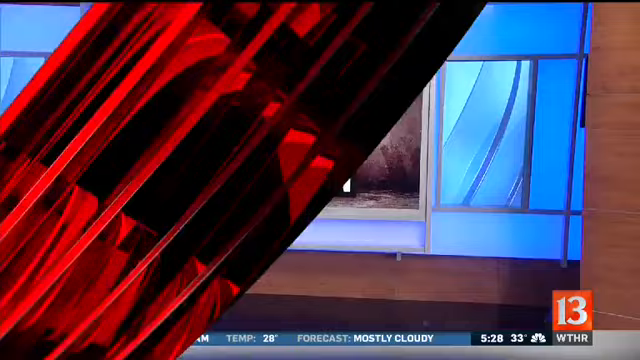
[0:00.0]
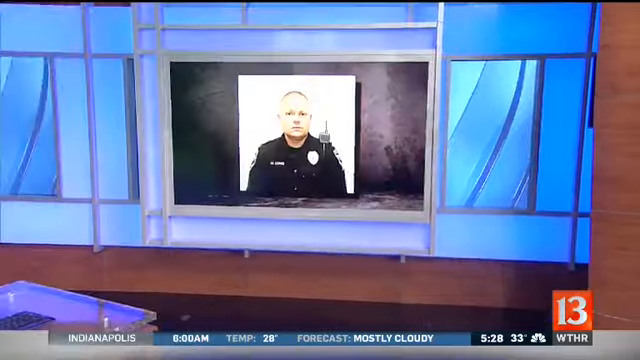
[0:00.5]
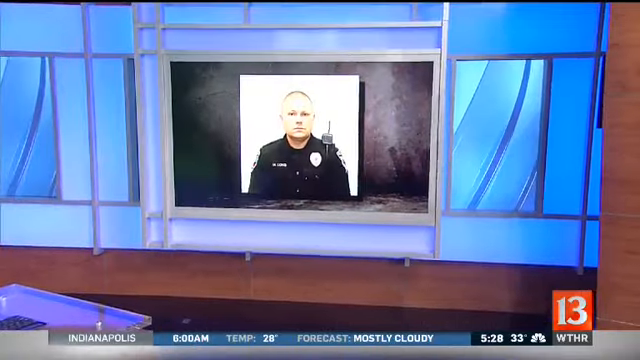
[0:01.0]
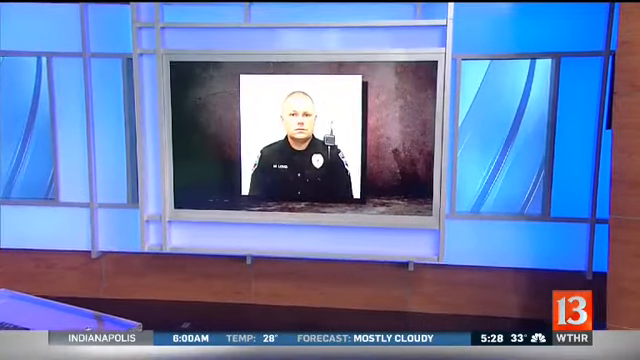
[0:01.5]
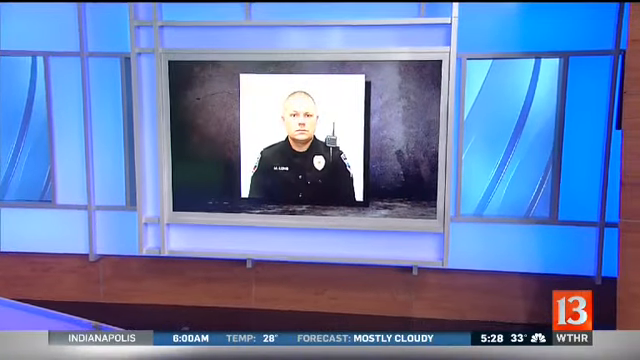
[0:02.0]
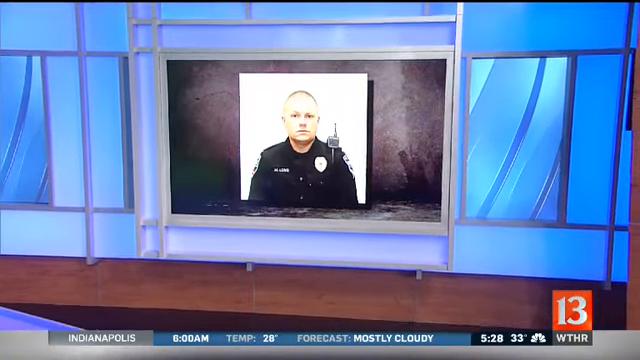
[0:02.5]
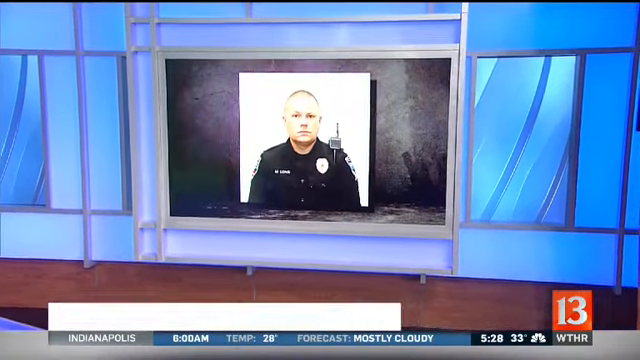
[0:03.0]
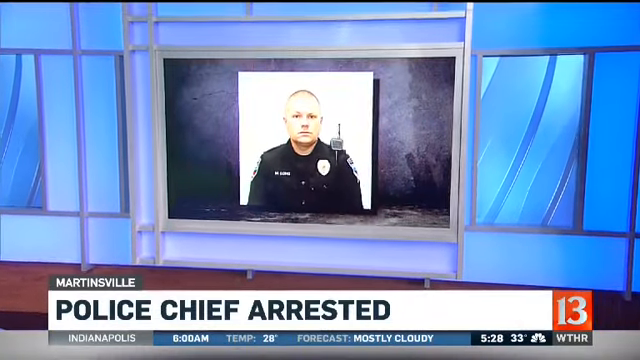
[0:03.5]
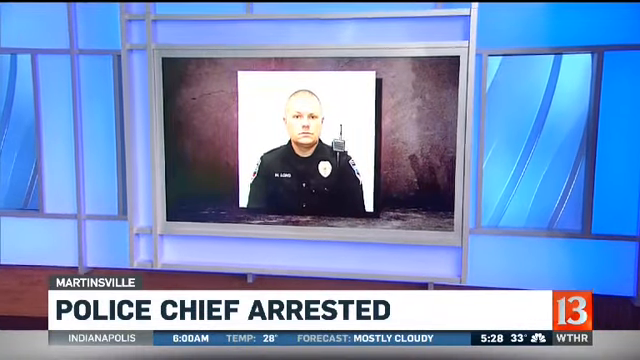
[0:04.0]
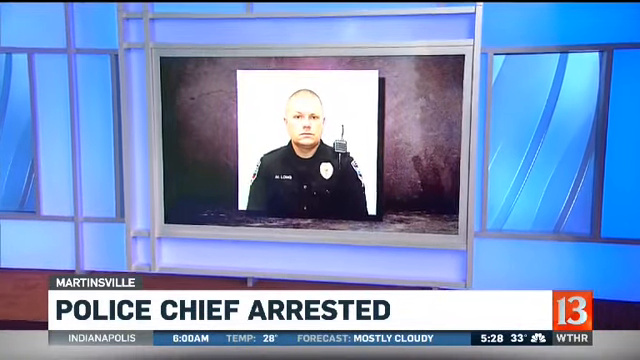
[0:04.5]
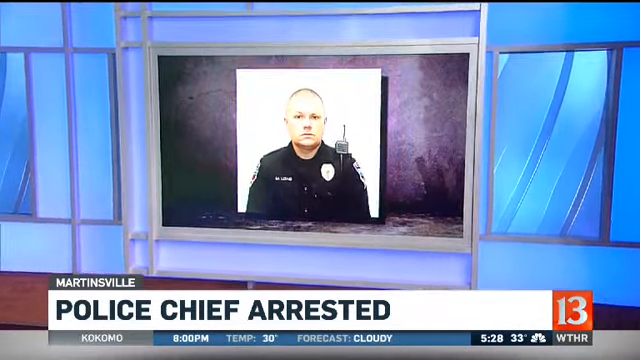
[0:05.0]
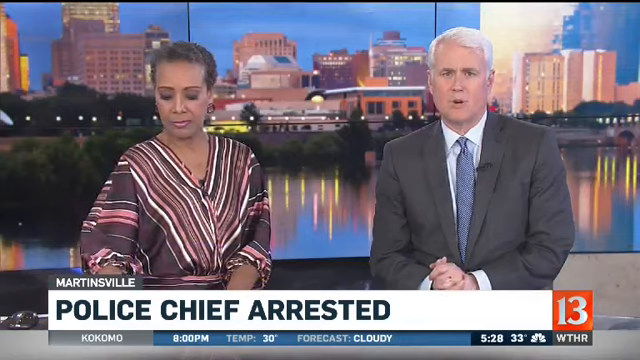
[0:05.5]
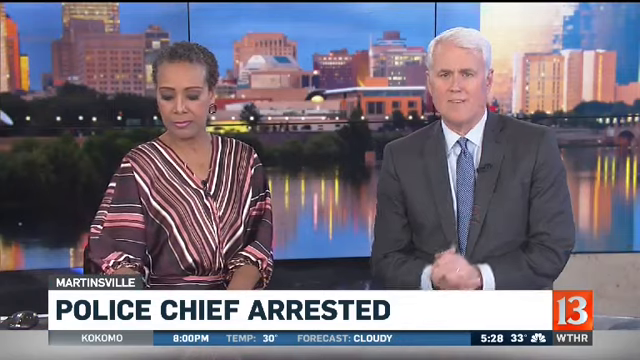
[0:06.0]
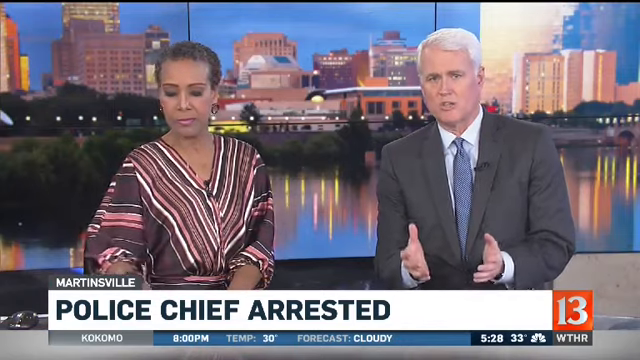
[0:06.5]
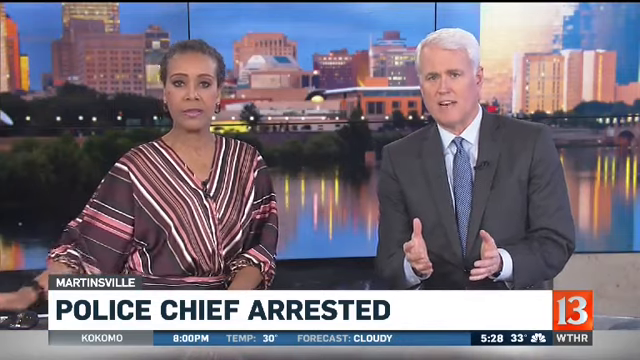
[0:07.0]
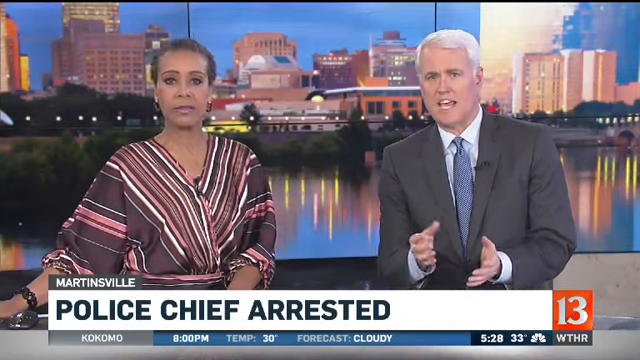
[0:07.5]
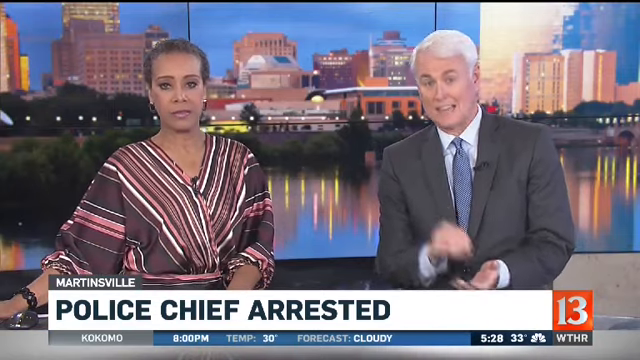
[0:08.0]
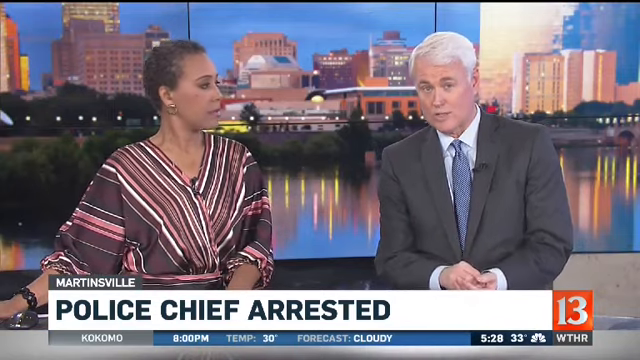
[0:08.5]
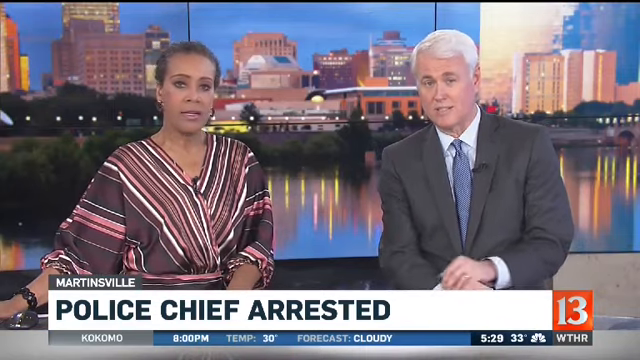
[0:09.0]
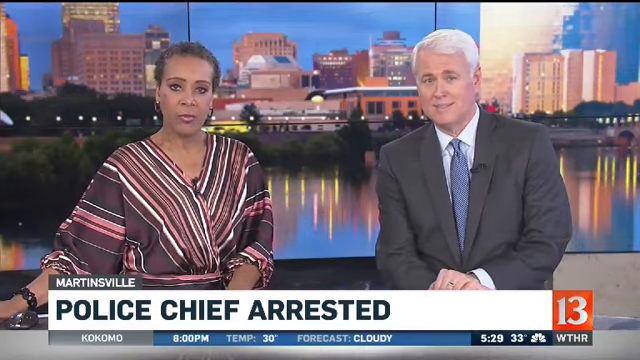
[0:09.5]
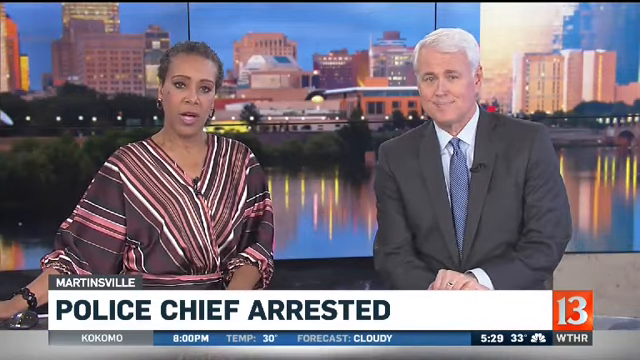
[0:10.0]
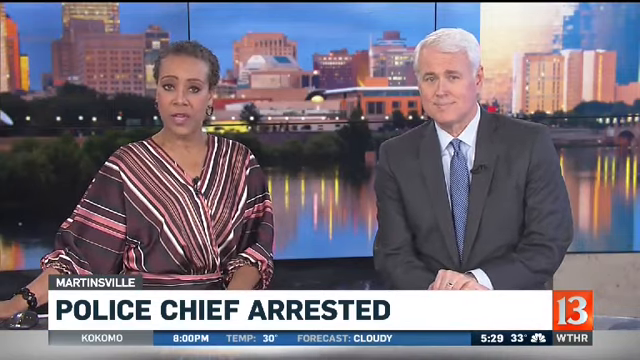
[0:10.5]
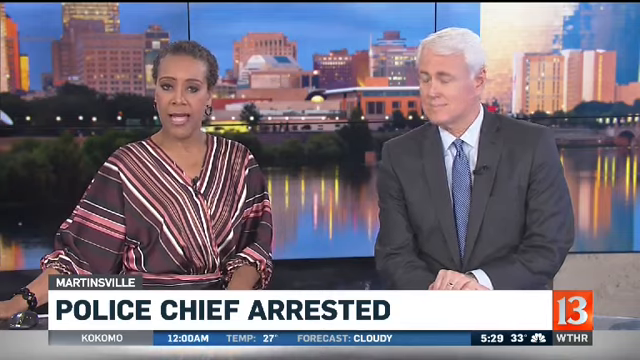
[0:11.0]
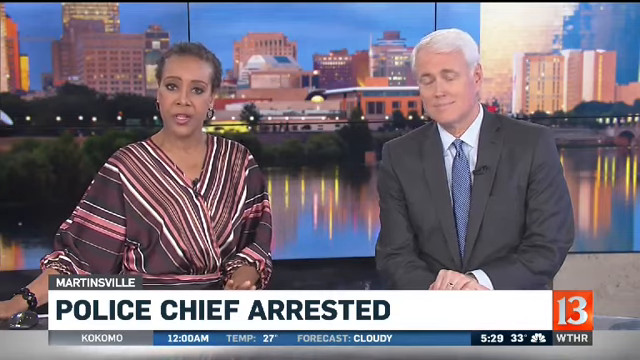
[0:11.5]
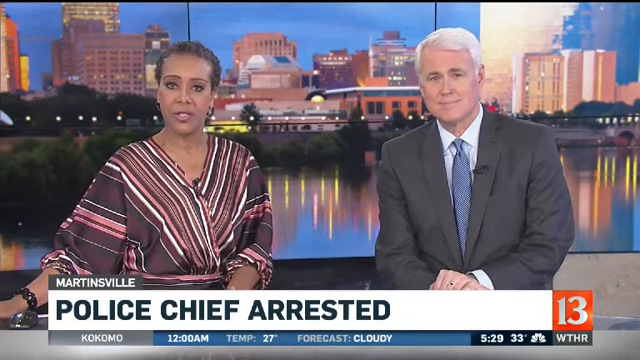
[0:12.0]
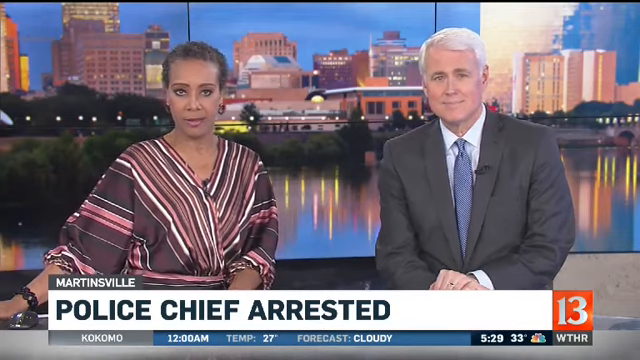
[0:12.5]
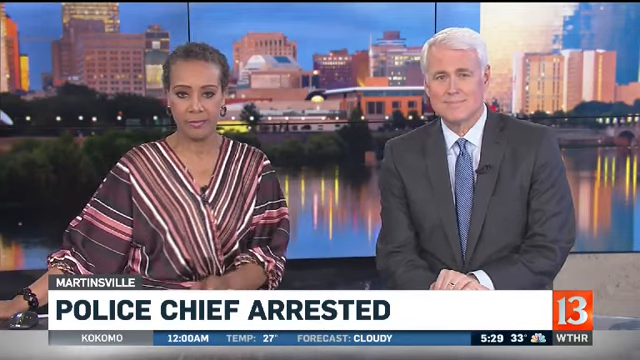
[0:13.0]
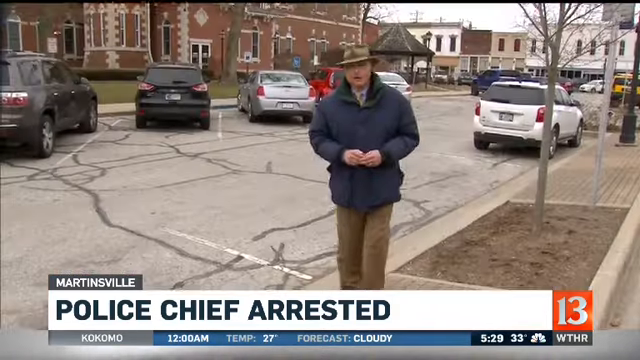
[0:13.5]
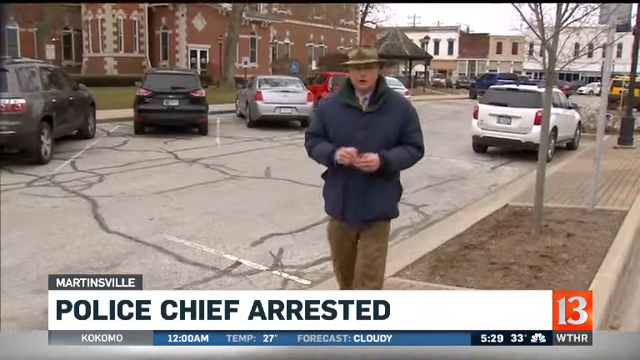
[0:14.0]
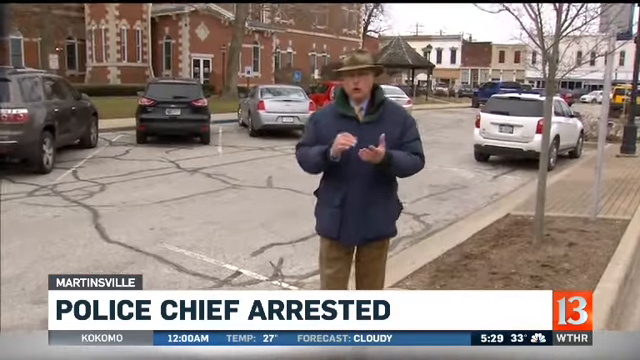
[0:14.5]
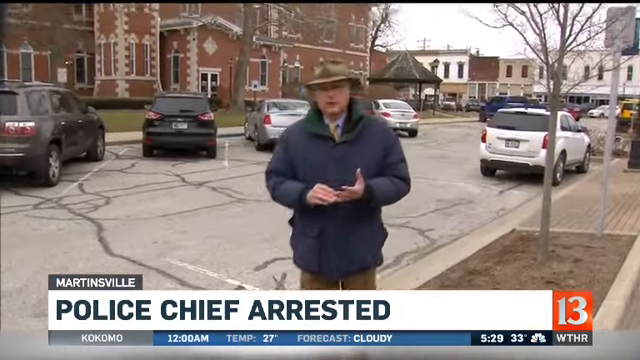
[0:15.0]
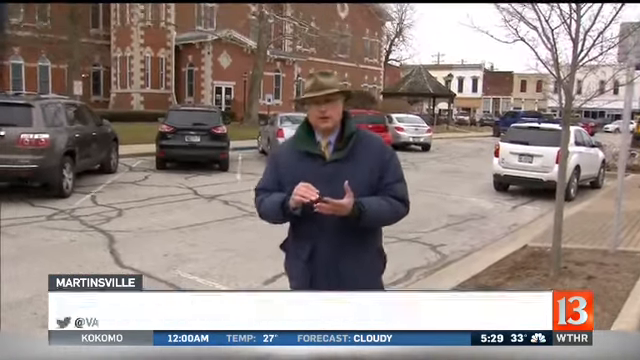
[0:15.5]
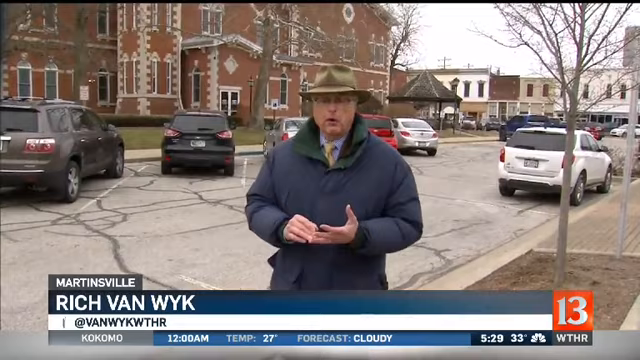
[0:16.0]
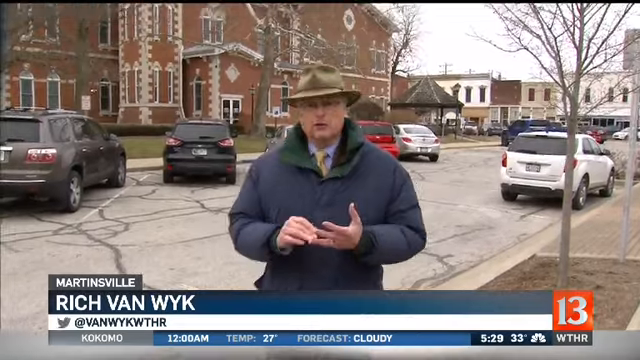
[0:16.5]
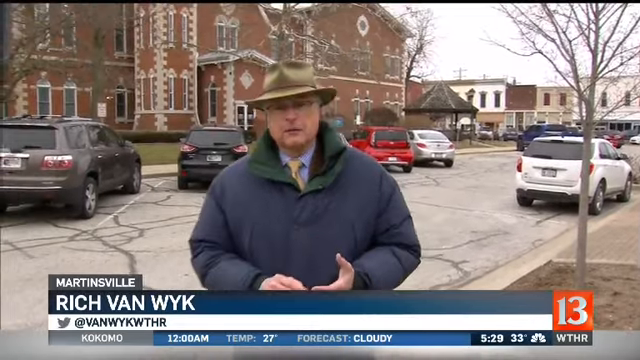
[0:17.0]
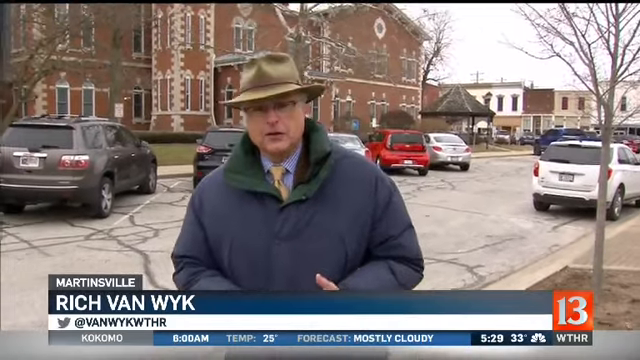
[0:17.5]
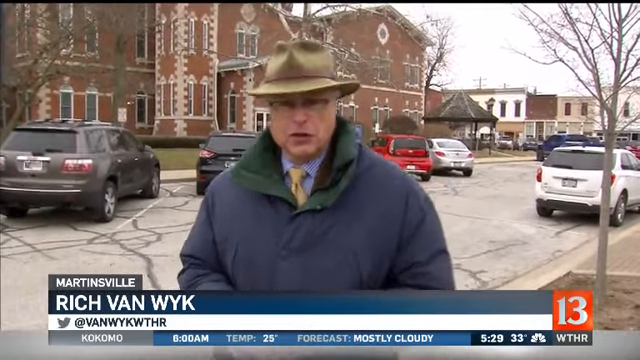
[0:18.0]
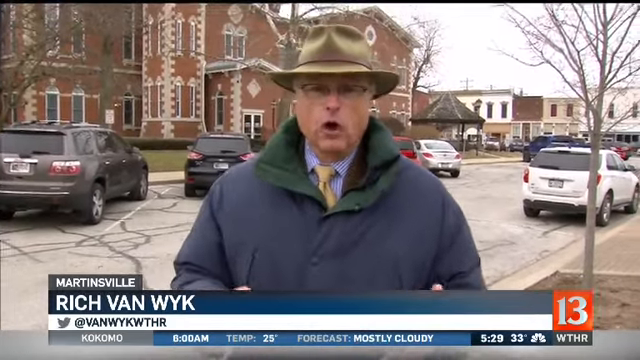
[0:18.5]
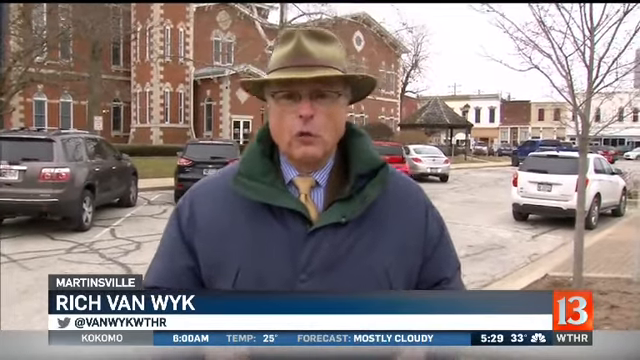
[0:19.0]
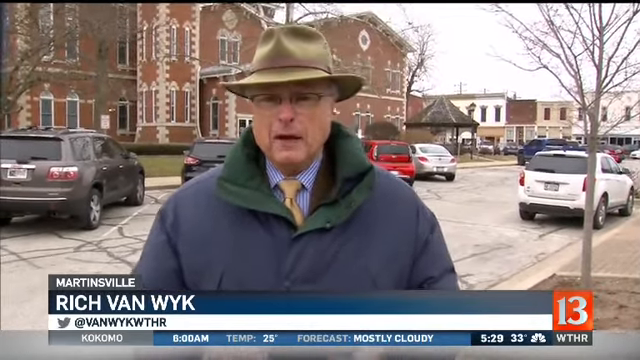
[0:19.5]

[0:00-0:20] Starting from a good portion of the screen left of the middle, a red, sort of ribbon-shaped rectangle serves as a transition, moving left and off the screen. It reveals a screenshot of a police chief being arrested, and the video zooms in on the screenshot. It then cuts to two news broadcasters: a lady on the left and a guy on the right. The lady wears something almost like a robe with brown, white, pink, and tan stripes, and the guy wears a gray suit with a blue tie and a white shirt. The video then cuts to on-the-ground footage with a different news broadcaster, a guy in a blue coat and a hat that is hard to tell whether it is green or tan. He walks to the front of the camera, into the frame, and starts talking.